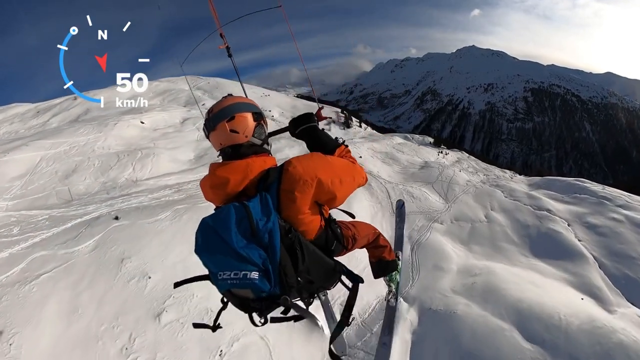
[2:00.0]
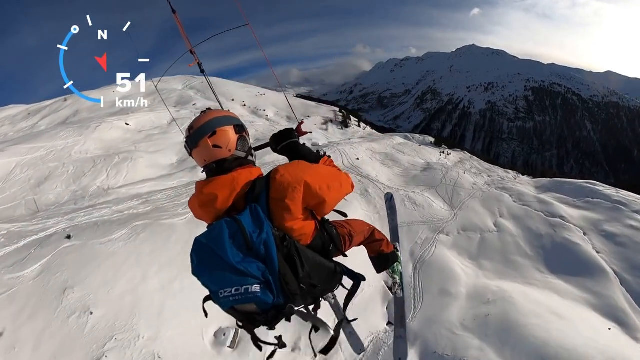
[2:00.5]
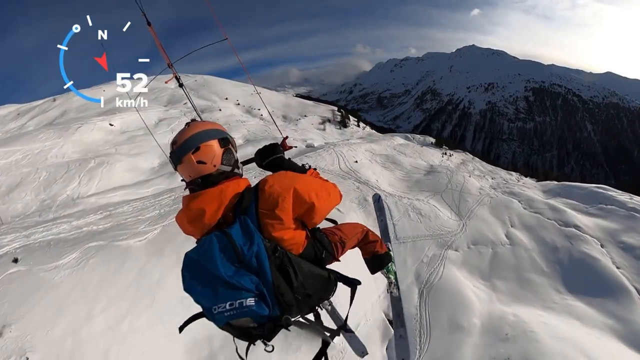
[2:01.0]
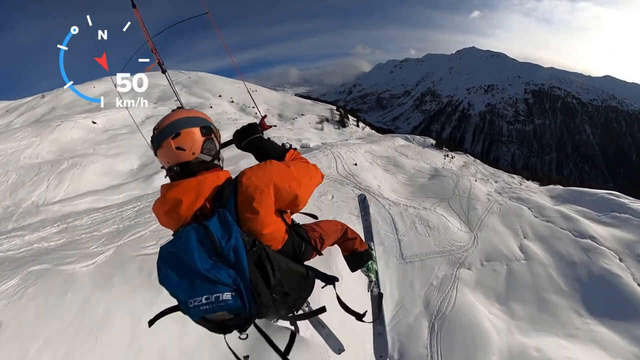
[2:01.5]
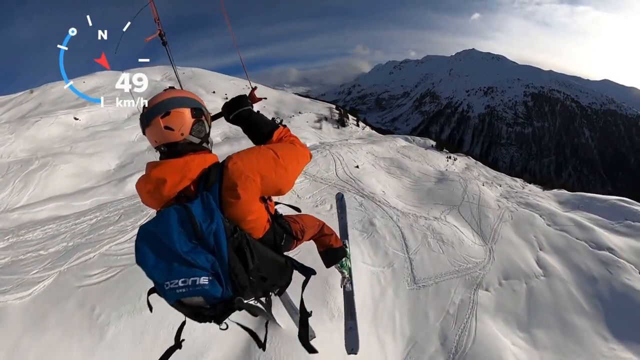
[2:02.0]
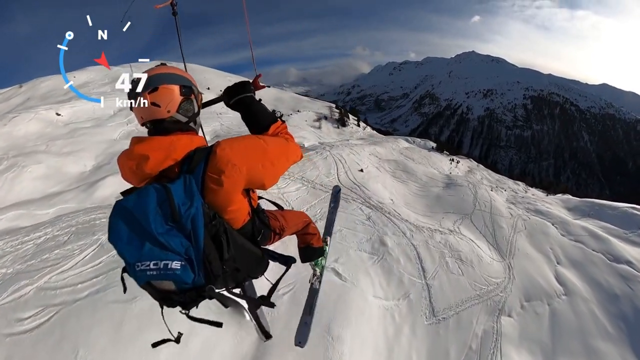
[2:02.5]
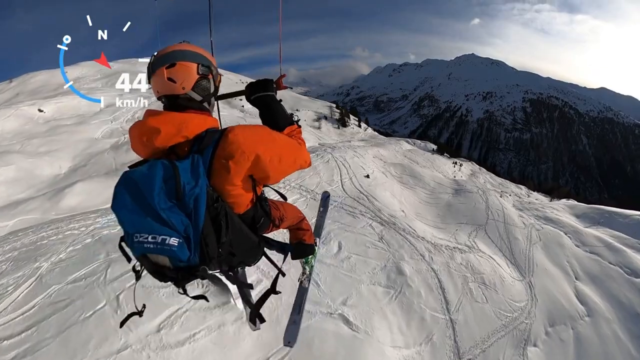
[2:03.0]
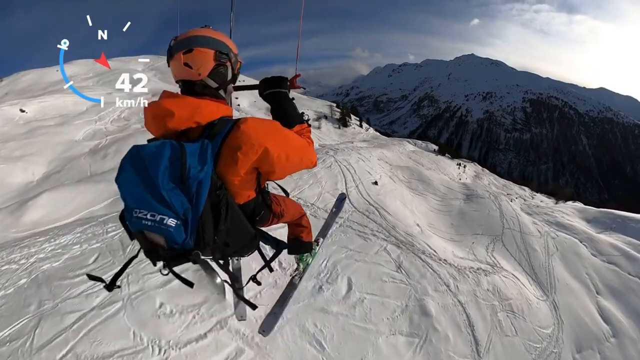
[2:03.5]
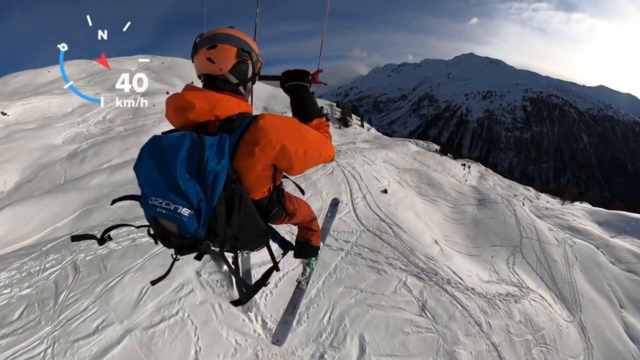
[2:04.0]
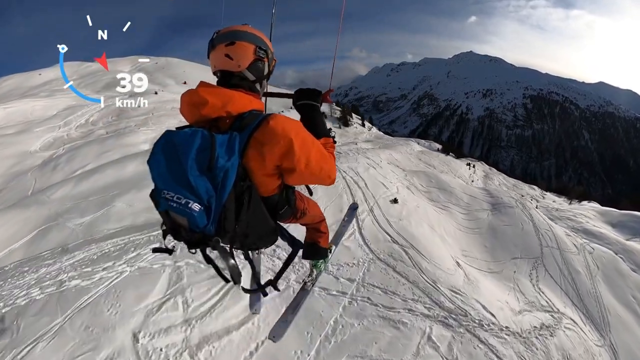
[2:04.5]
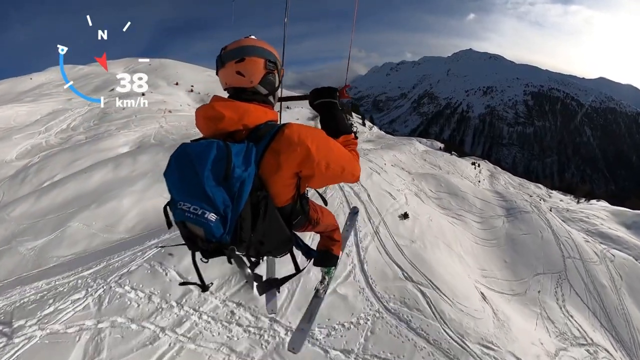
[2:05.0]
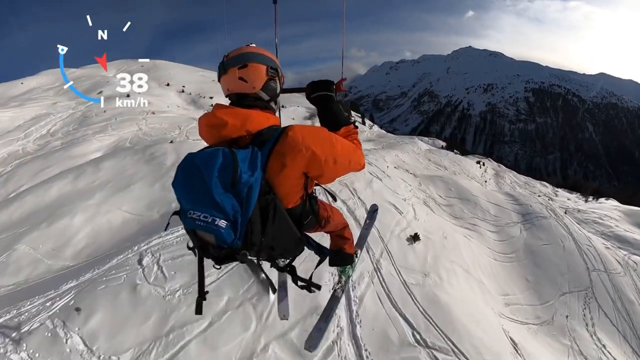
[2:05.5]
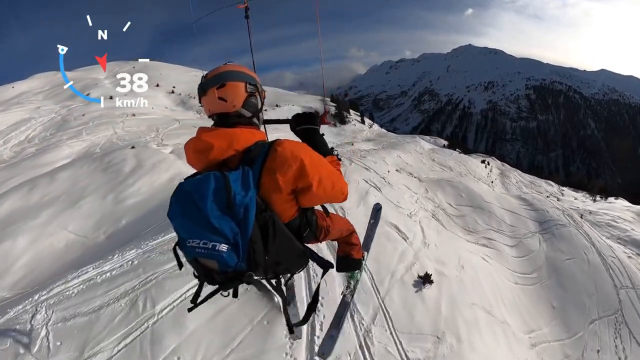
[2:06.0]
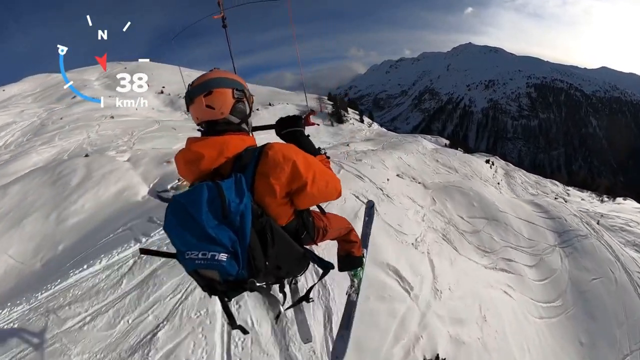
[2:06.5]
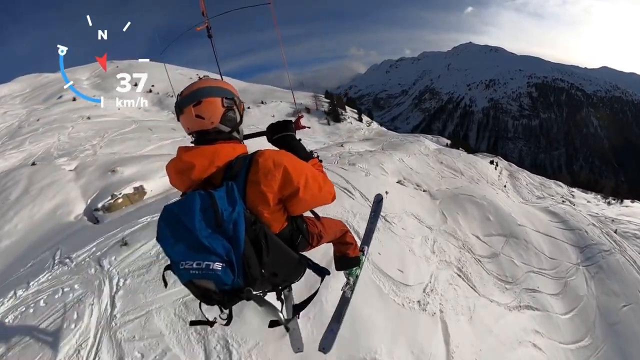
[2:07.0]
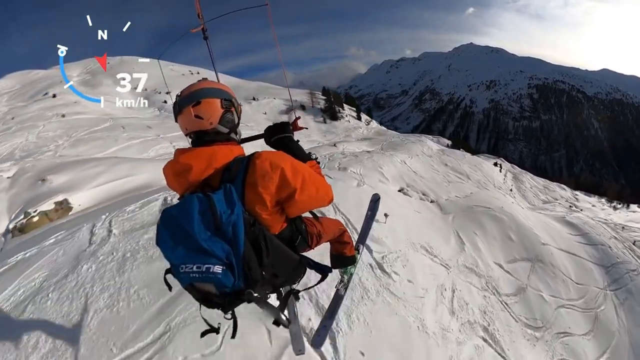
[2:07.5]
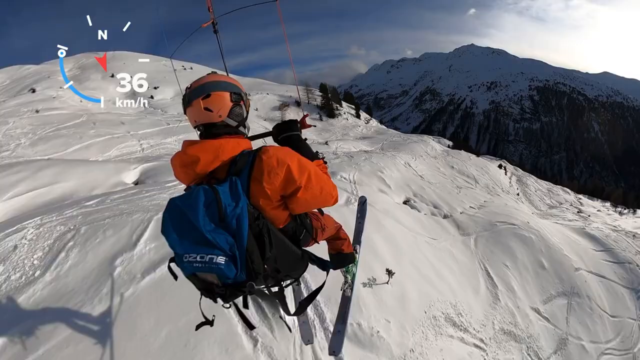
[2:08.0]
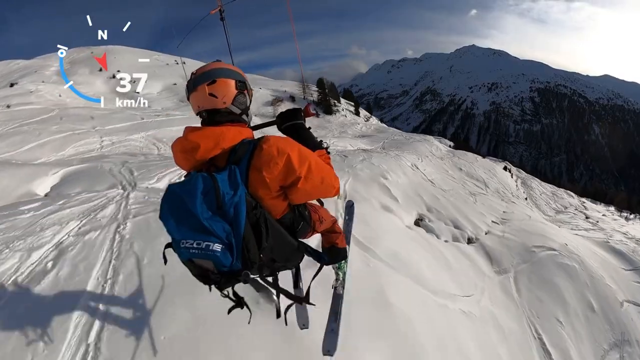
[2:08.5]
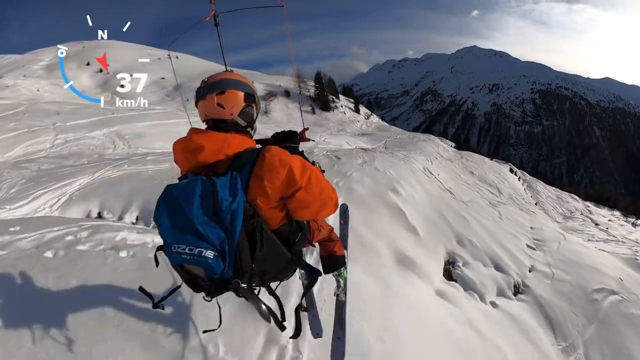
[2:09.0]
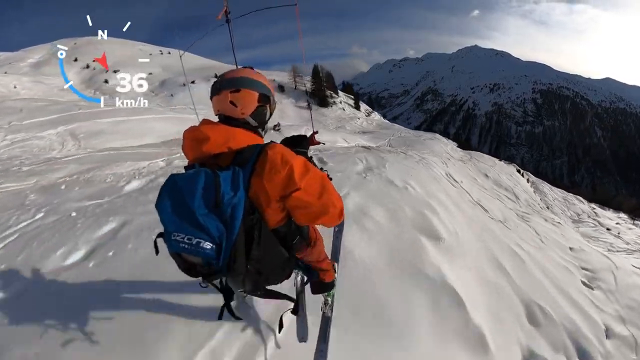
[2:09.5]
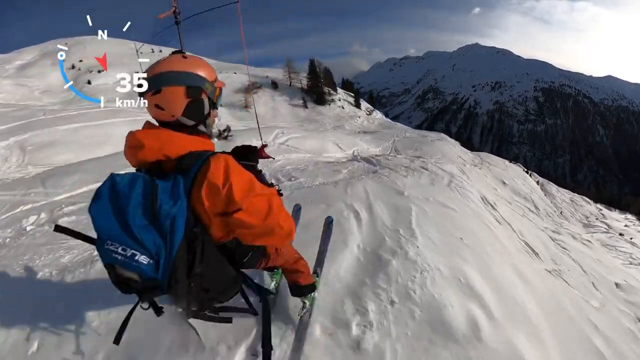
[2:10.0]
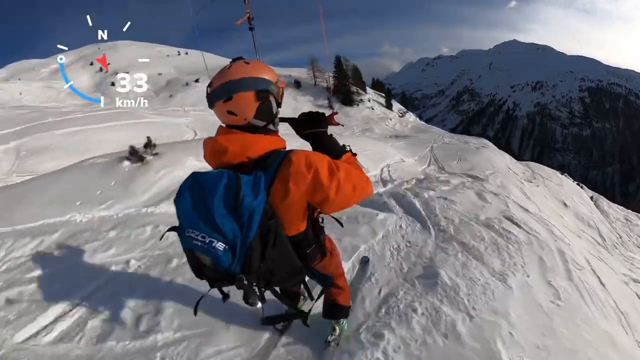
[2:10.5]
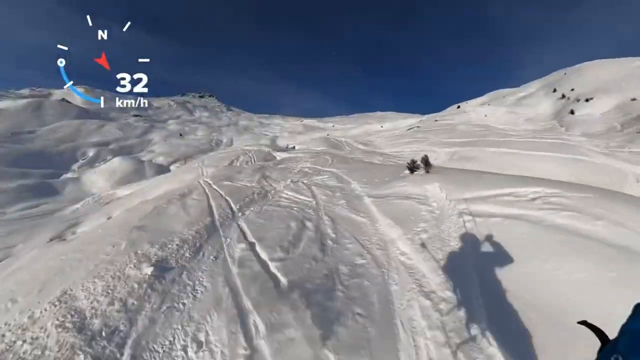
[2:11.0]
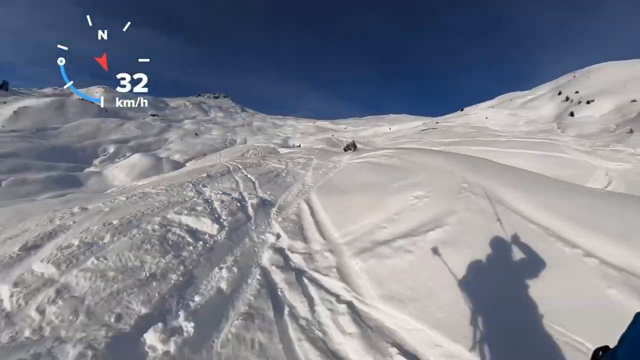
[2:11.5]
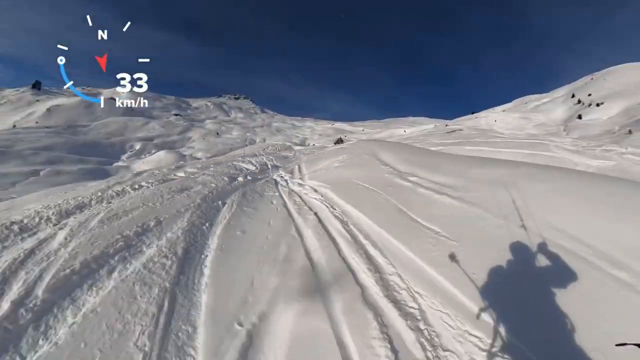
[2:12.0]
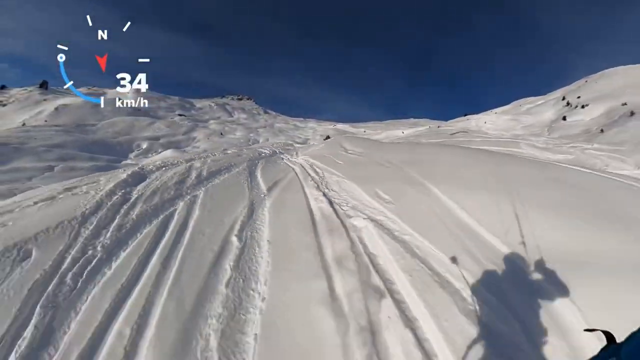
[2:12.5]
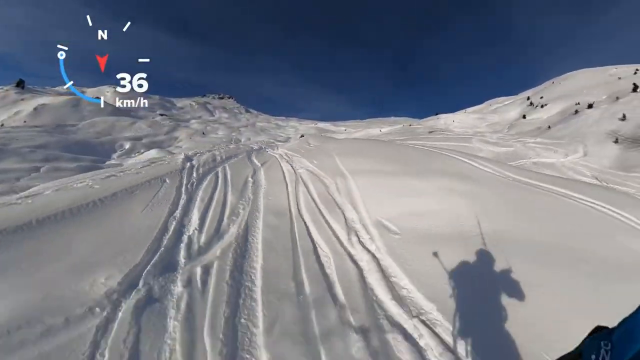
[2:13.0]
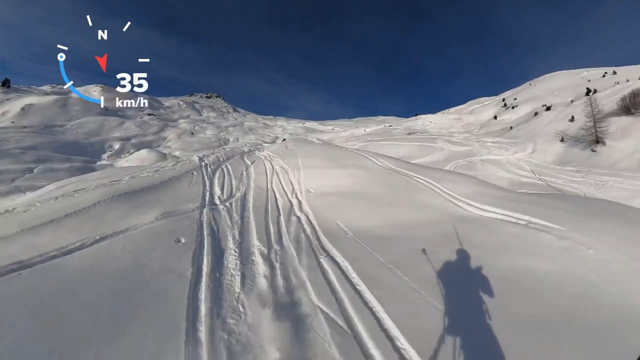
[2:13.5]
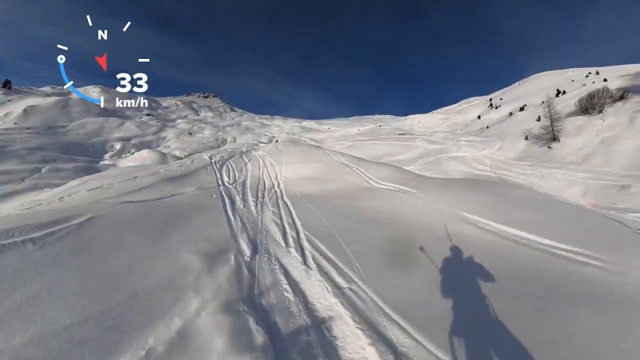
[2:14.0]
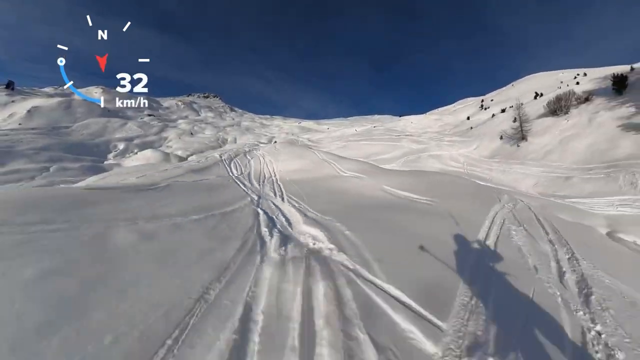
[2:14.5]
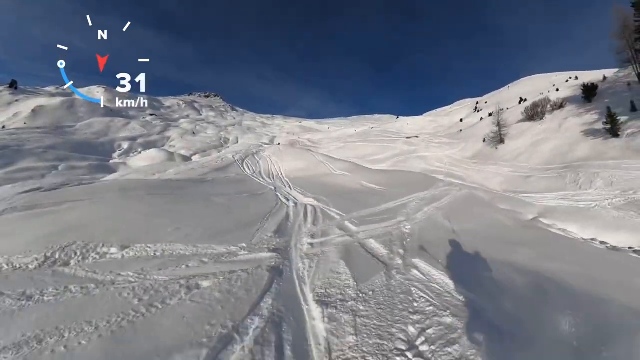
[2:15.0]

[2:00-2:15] The man is at 46 kilometers per hour and starting to slow down. The perspective changes more than before. He slows down and lands on the mountaintop with his skis, and his shadow becomes visible. He has been using a selfie stick the entire time, edited out of the video, but when the view switches to show behind the man, the shadow of the stick is visible in his shadow. The man turns the camera to show behind him, revealing the tracks and the mountain he has come down, multiple trees, and the snow on the mountain he lands on.